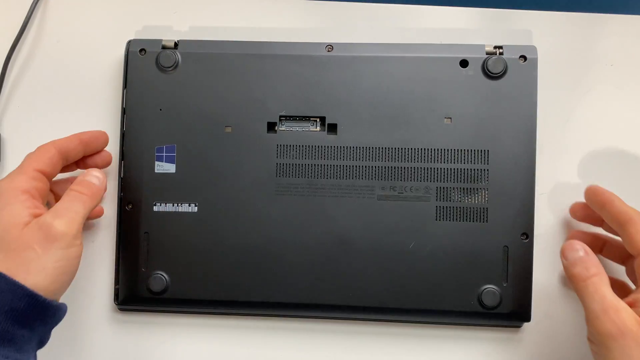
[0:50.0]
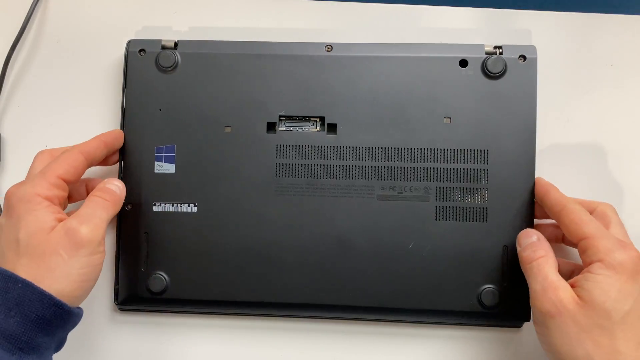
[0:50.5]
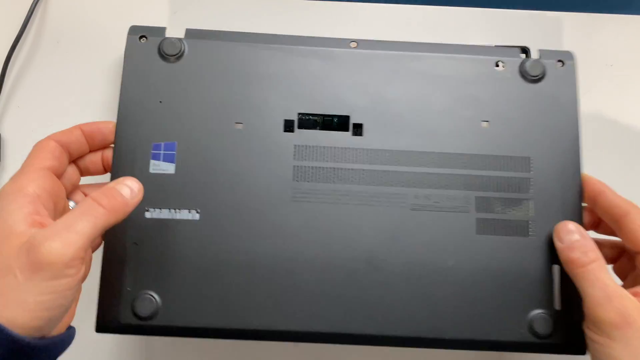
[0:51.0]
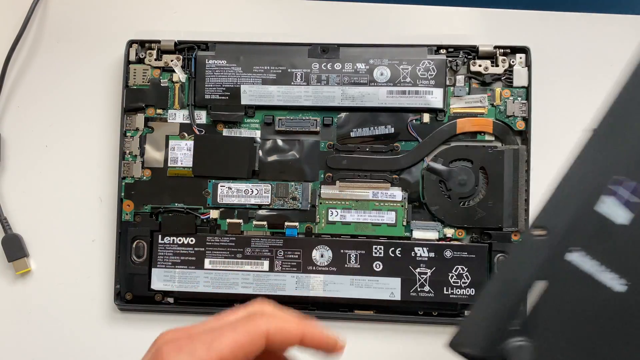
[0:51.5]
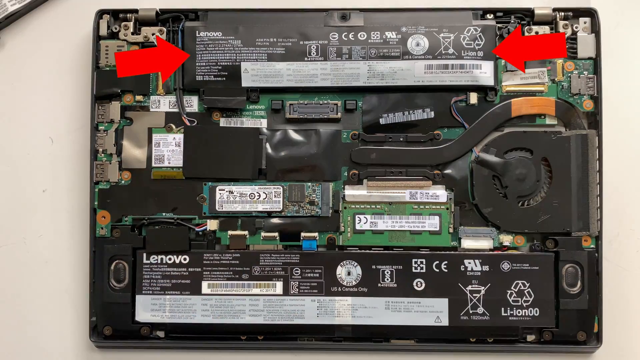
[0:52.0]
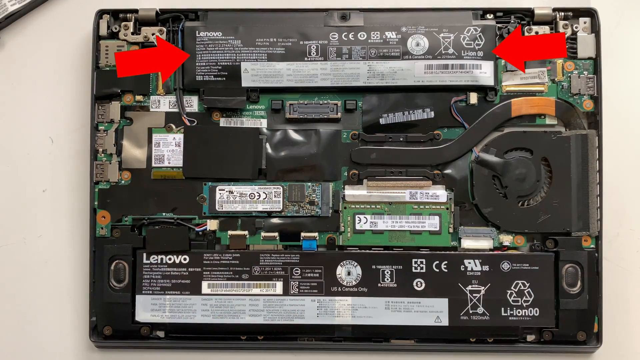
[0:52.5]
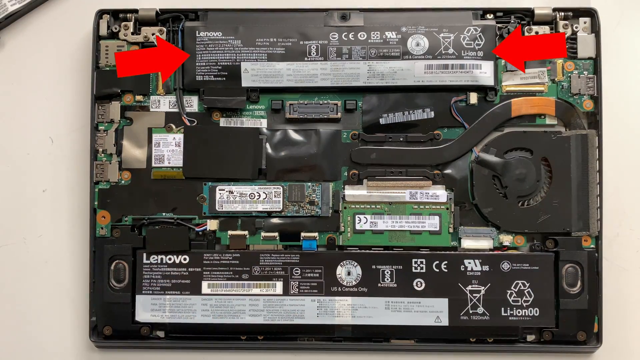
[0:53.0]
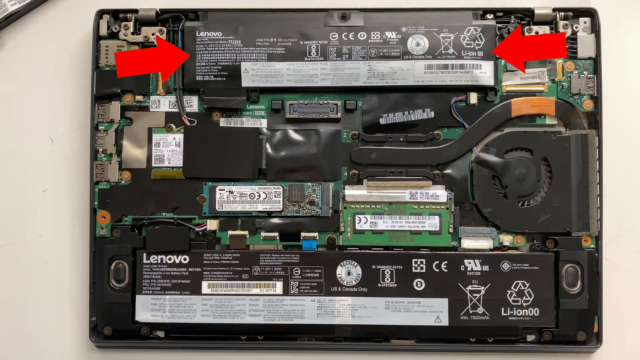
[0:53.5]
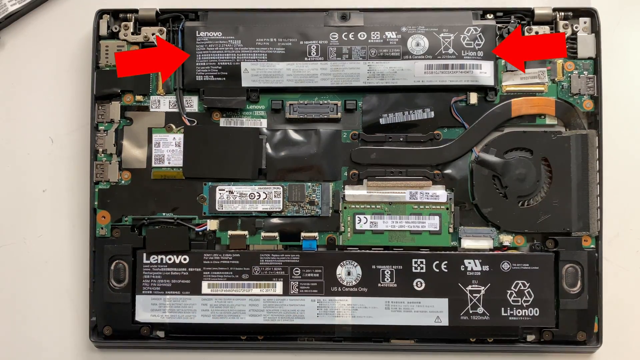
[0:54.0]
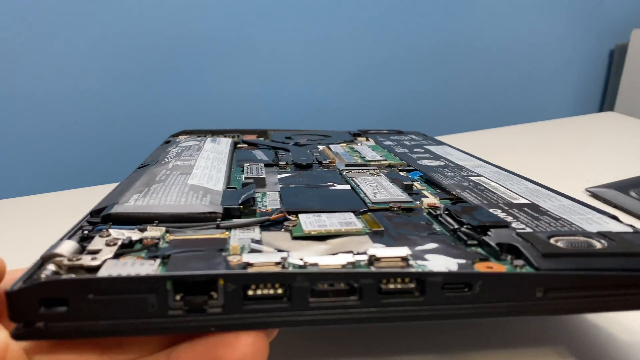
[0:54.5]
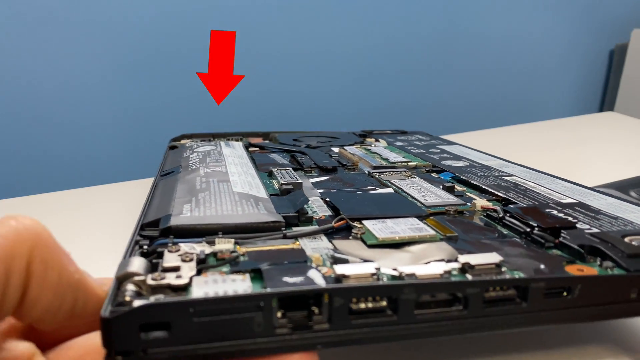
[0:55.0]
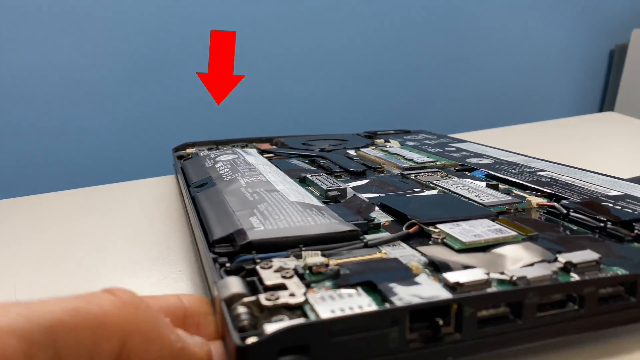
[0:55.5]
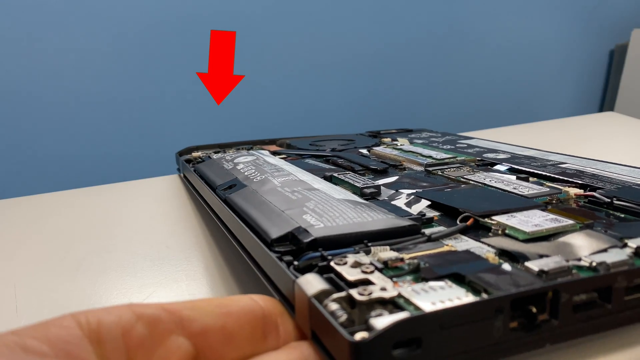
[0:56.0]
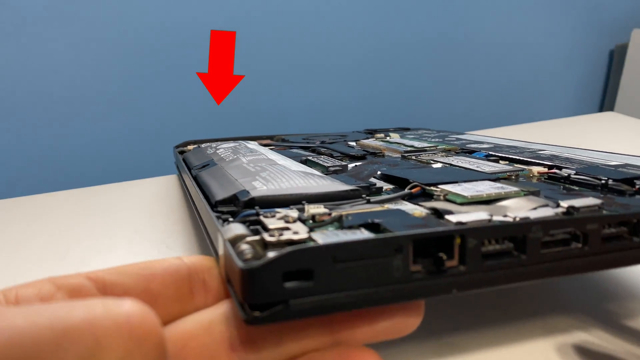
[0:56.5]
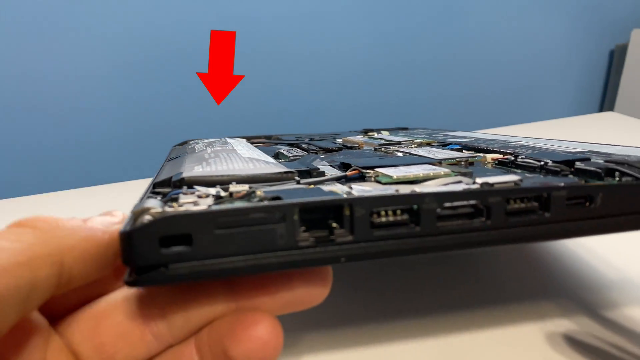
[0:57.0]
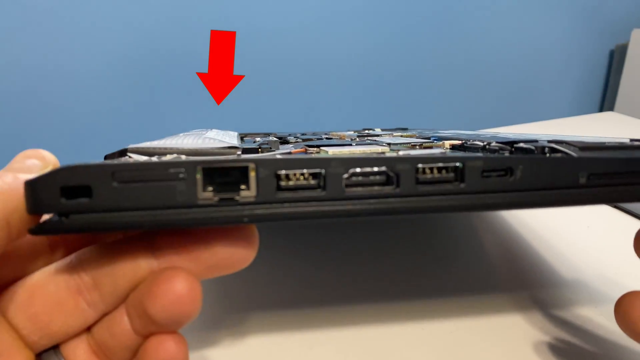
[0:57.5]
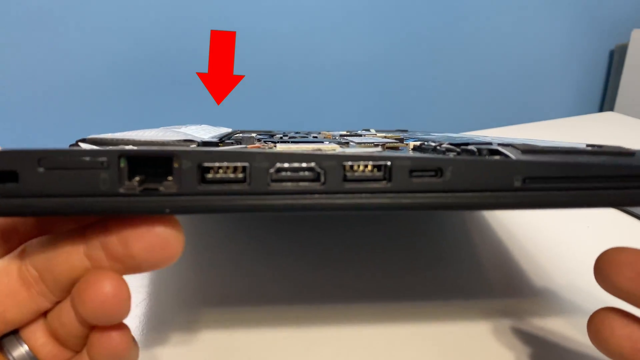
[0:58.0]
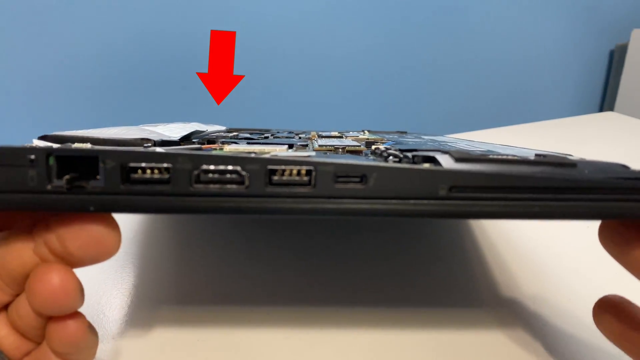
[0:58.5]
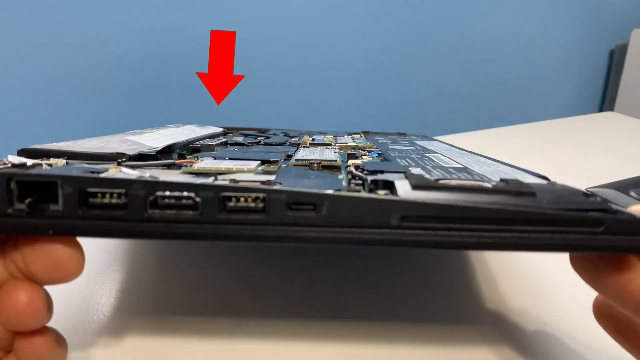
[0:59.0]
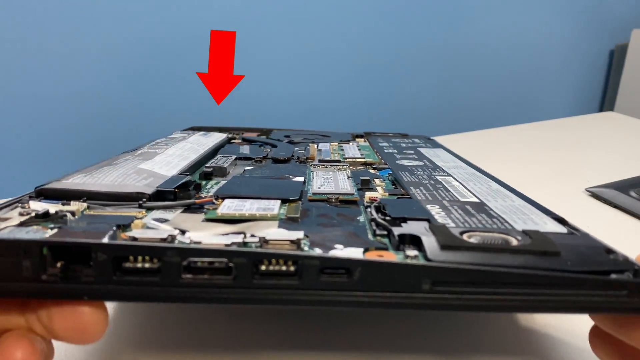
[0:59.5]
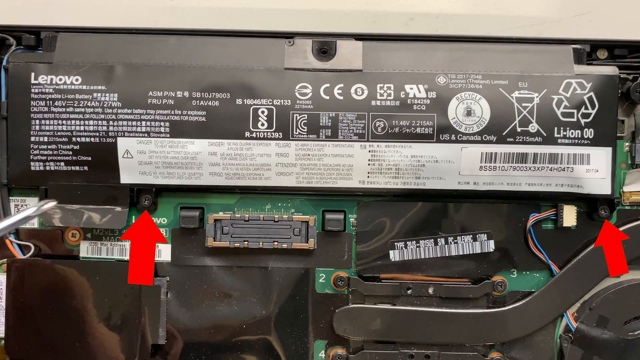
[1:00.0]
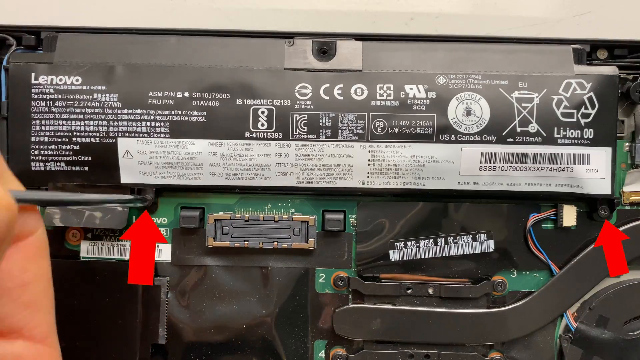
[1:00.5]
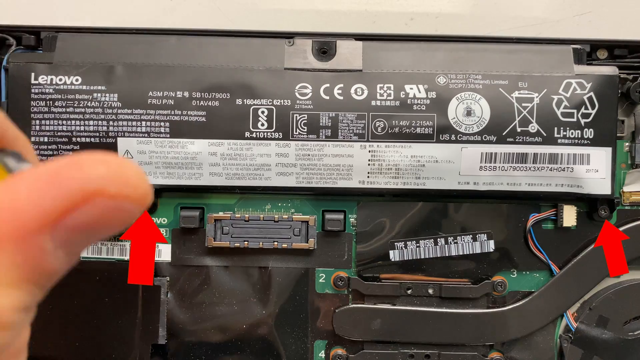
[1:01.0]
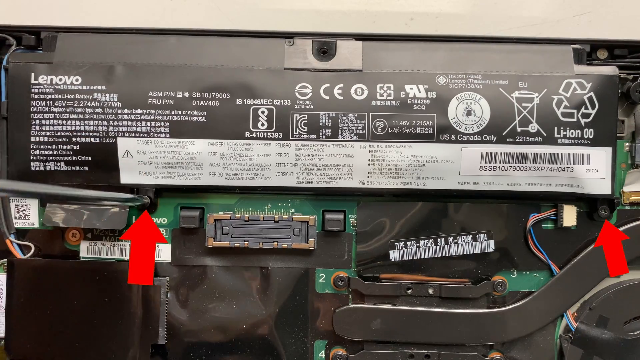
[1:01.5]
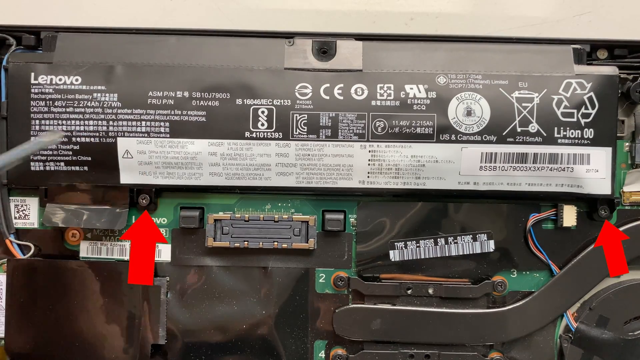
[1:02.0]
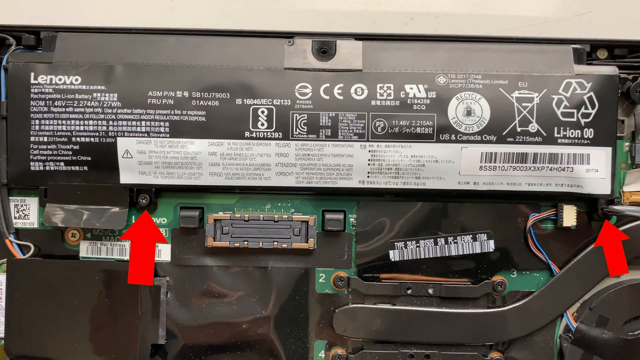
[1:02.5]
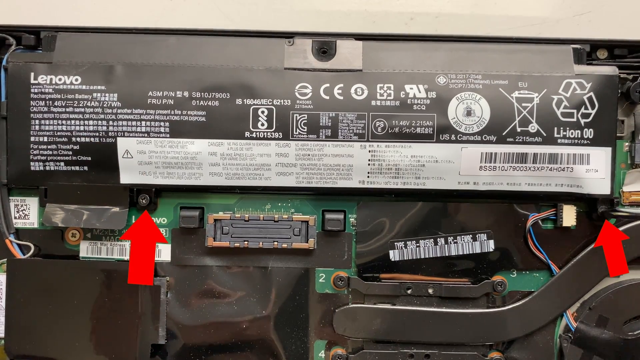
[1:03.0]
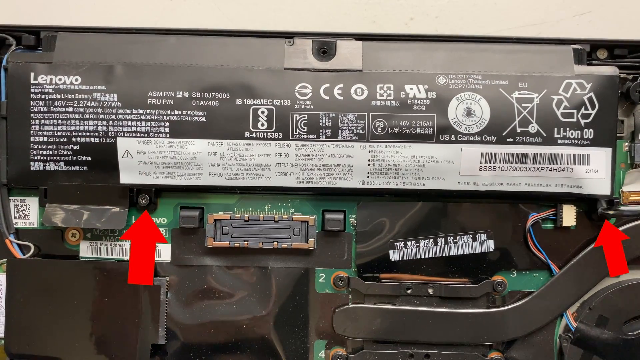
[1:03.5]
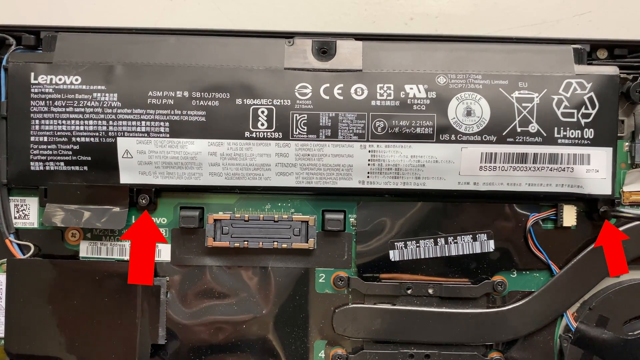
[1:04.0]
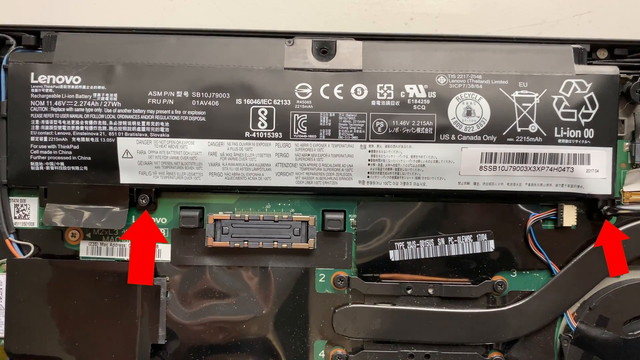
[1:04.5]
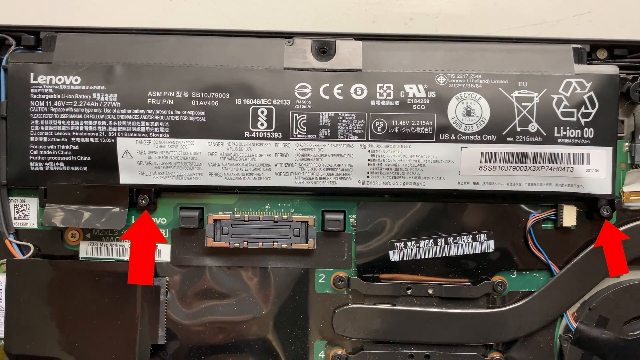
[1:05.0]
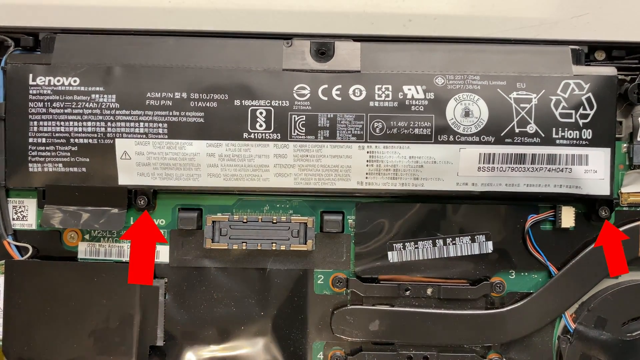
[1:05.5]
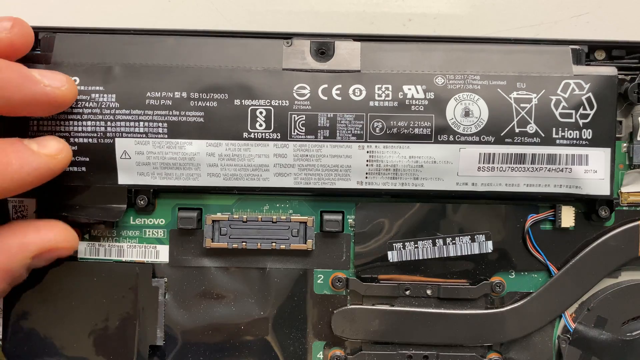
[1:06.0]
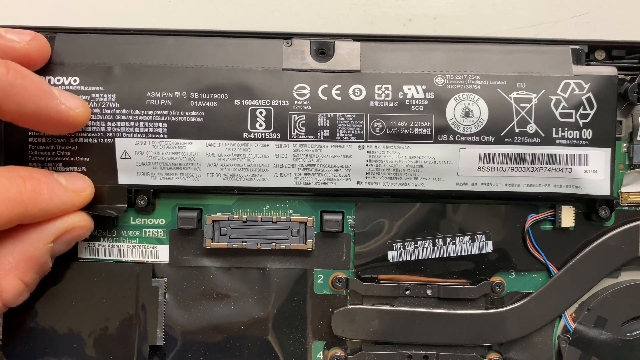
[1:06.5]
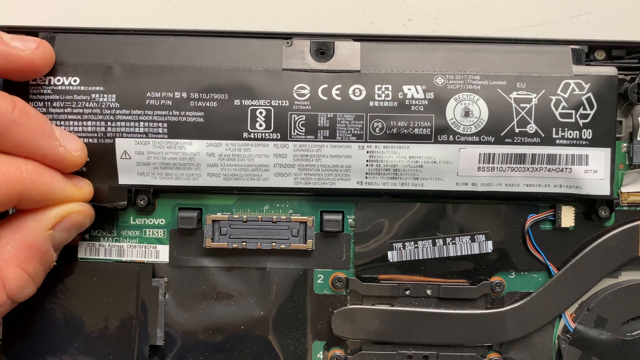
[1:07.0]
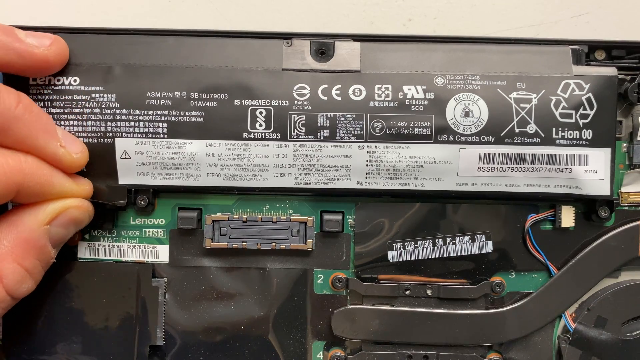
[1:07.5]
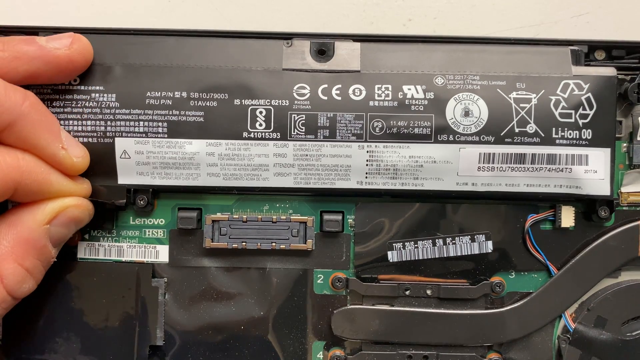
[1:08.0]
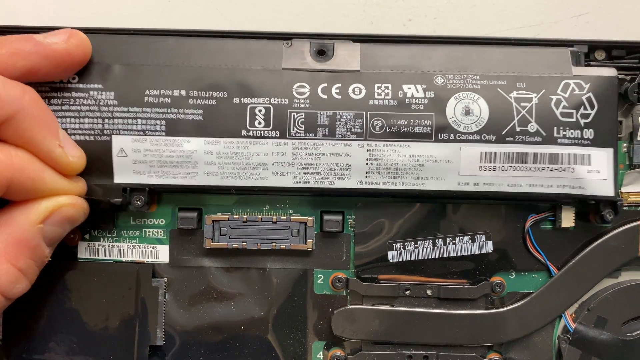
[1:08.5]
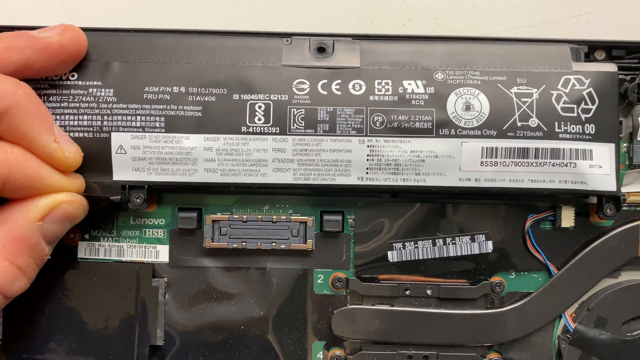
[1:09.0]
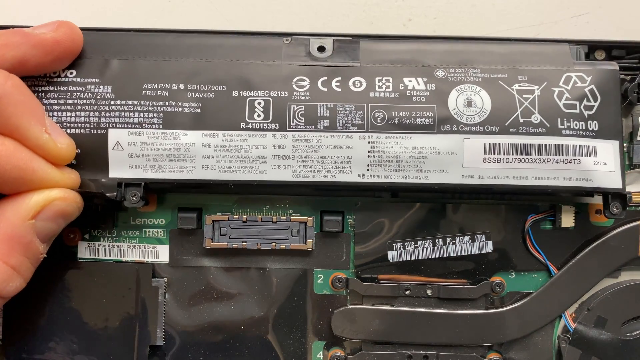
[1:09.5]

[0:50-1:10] The man working on the laptop unscrews the back panel and takes it off. He then points to a long black rectangular piece that says "Lenovo", apparently the battery. After pointing out the long black Lenovo box, he starts lifting a little flap.